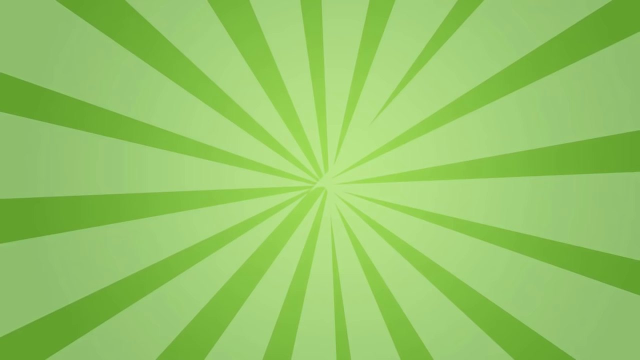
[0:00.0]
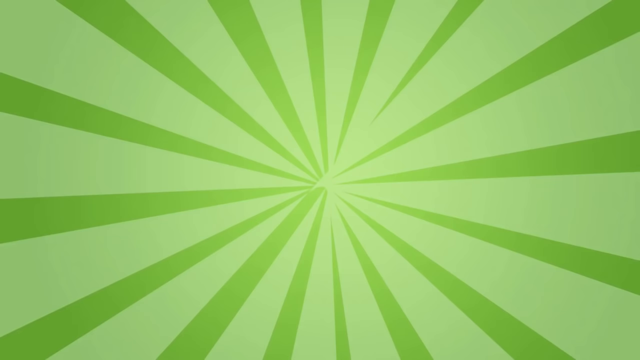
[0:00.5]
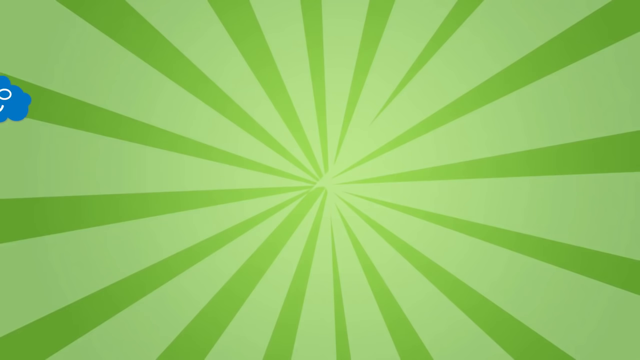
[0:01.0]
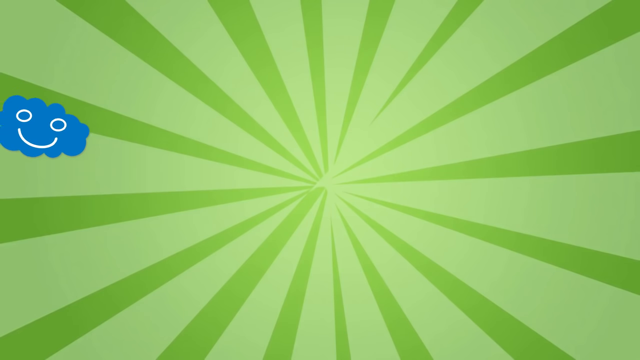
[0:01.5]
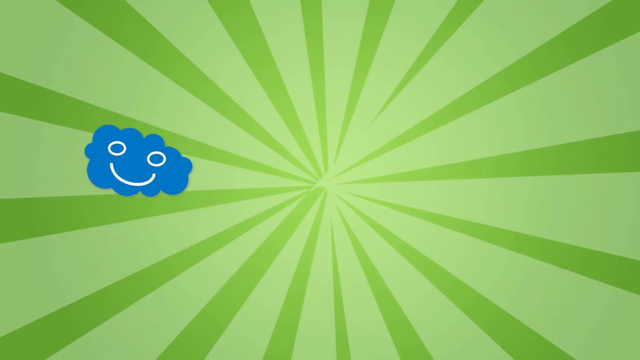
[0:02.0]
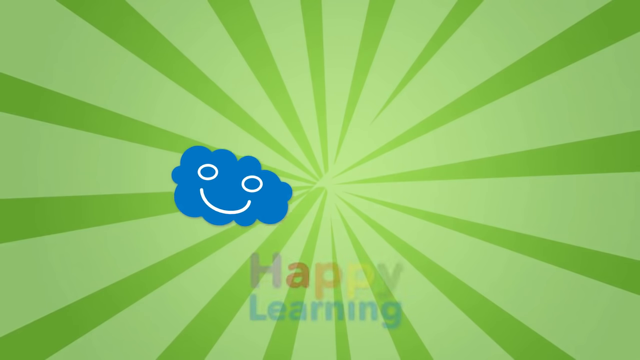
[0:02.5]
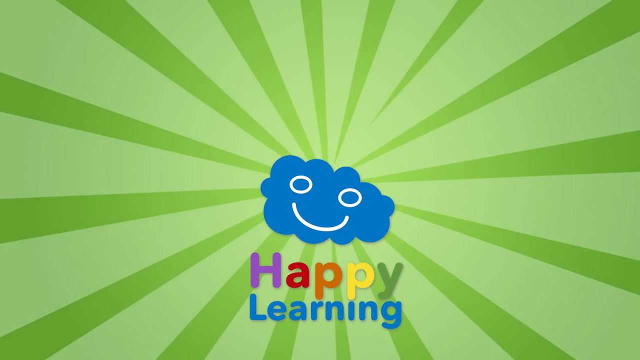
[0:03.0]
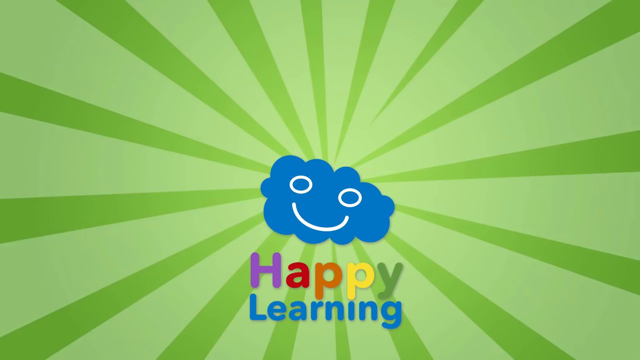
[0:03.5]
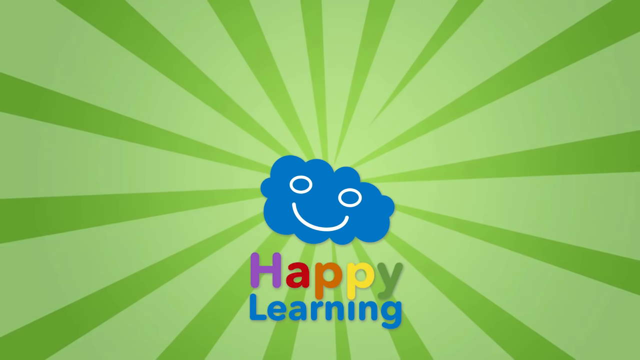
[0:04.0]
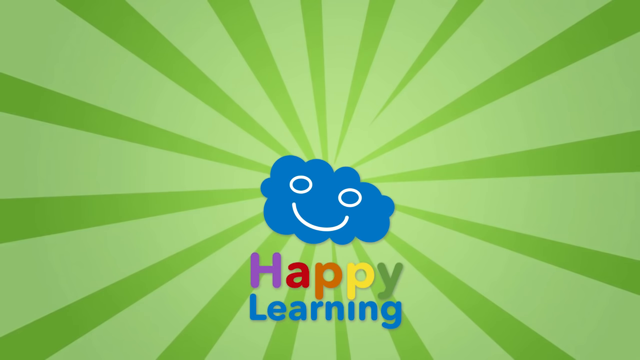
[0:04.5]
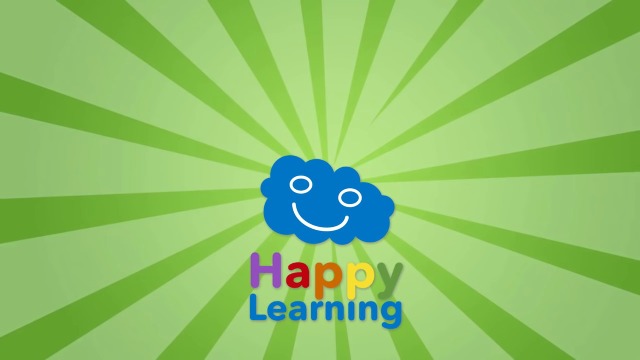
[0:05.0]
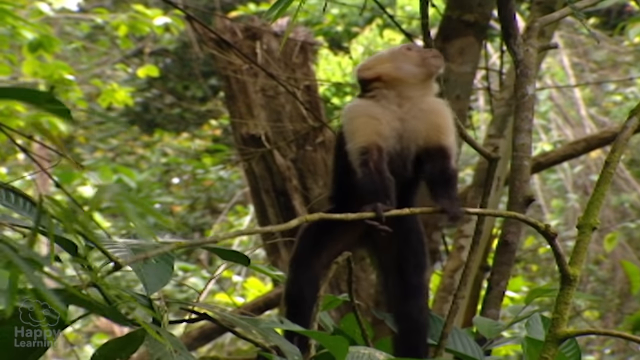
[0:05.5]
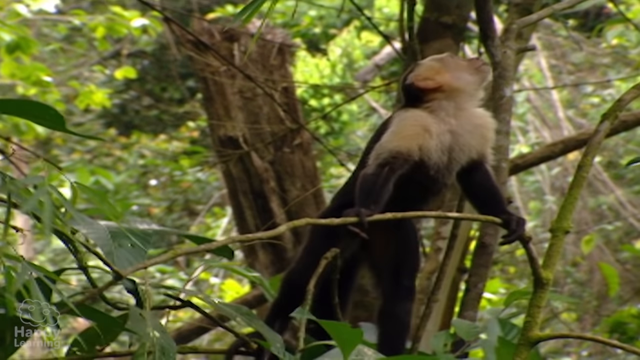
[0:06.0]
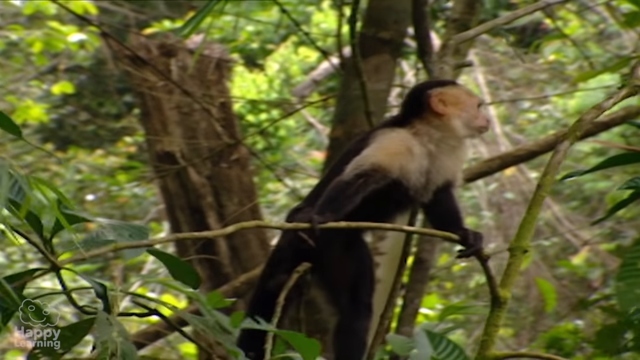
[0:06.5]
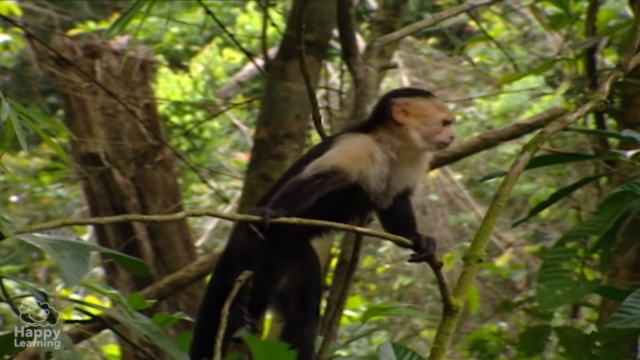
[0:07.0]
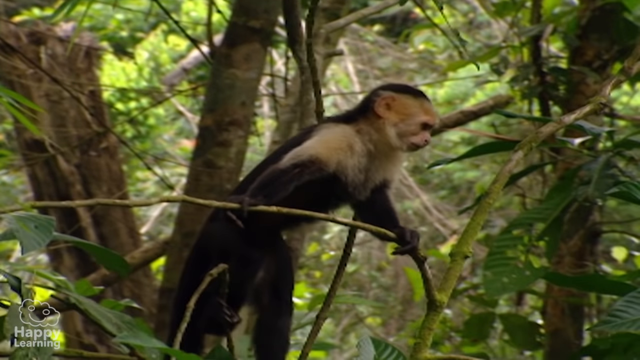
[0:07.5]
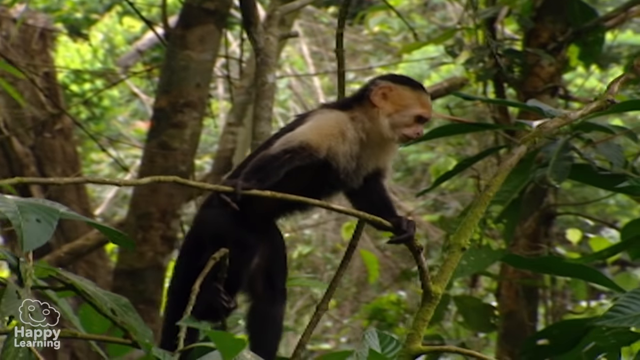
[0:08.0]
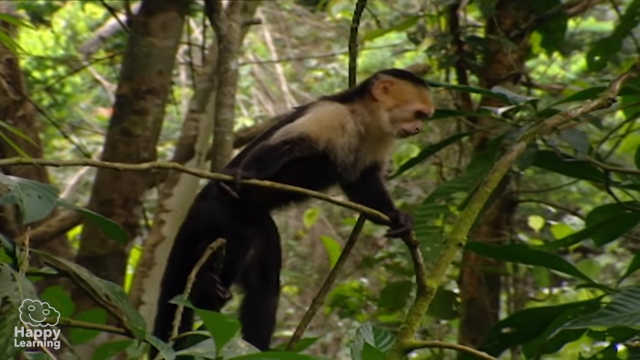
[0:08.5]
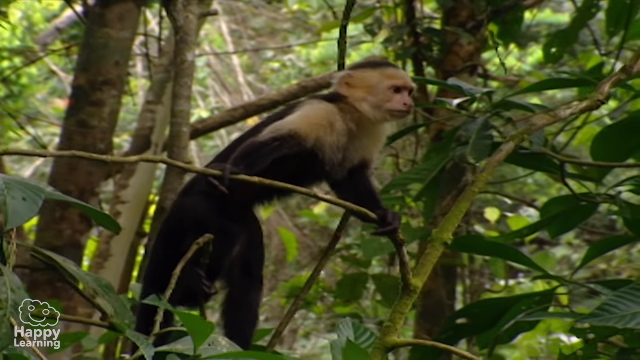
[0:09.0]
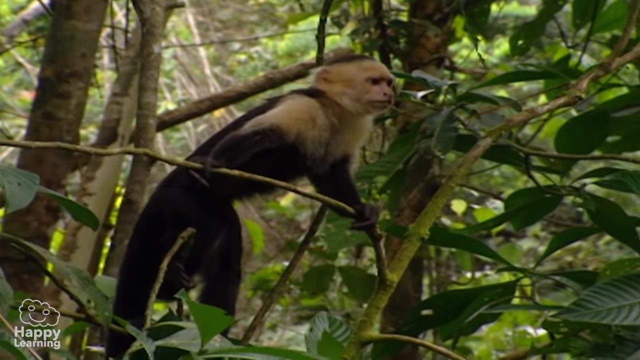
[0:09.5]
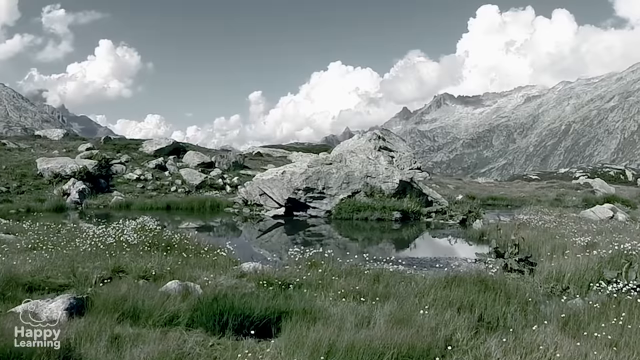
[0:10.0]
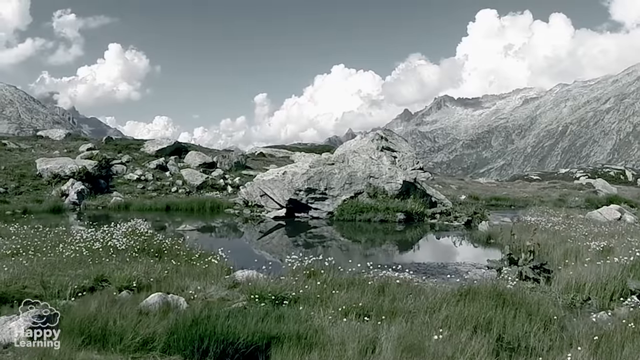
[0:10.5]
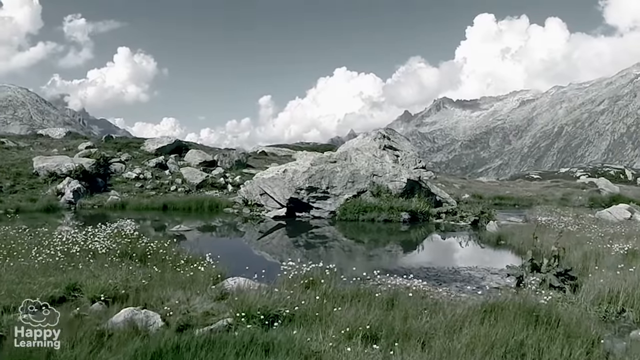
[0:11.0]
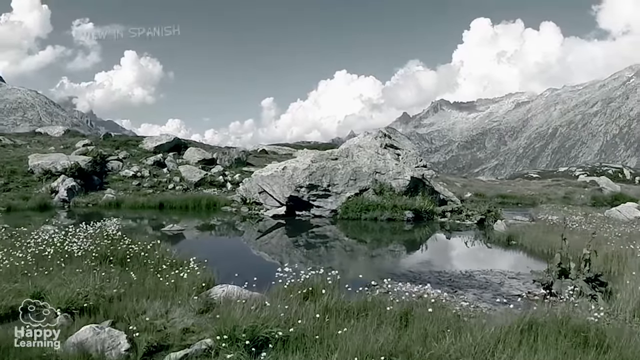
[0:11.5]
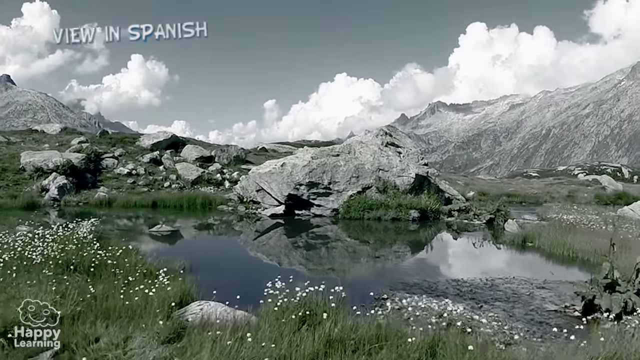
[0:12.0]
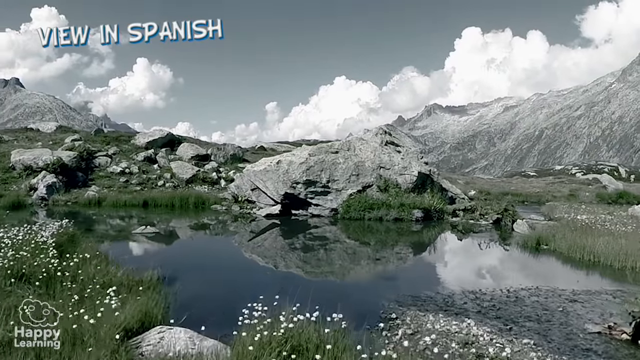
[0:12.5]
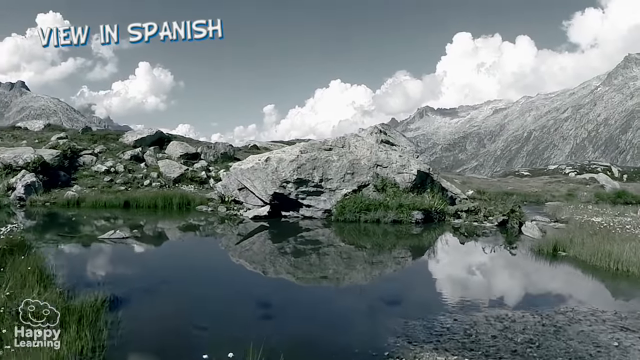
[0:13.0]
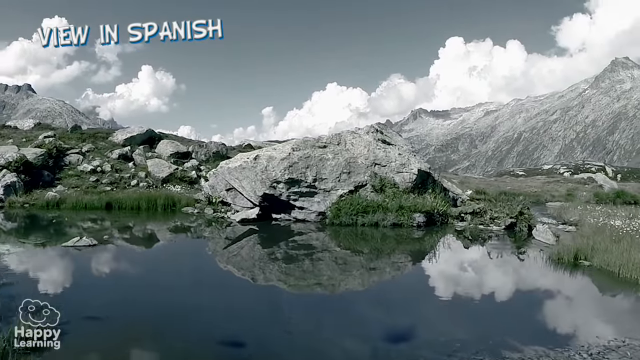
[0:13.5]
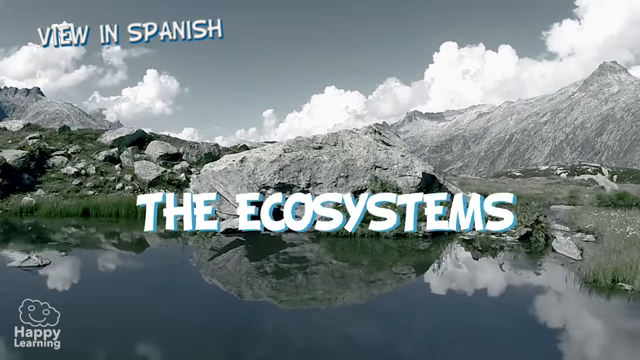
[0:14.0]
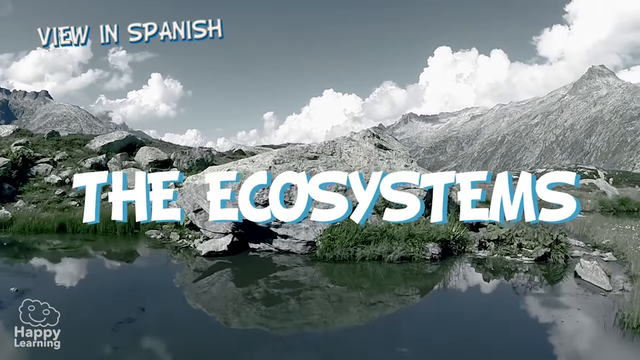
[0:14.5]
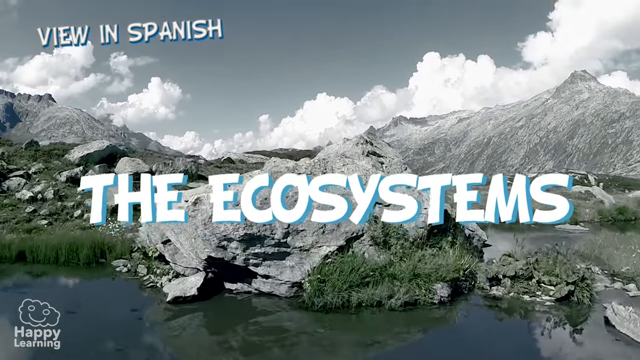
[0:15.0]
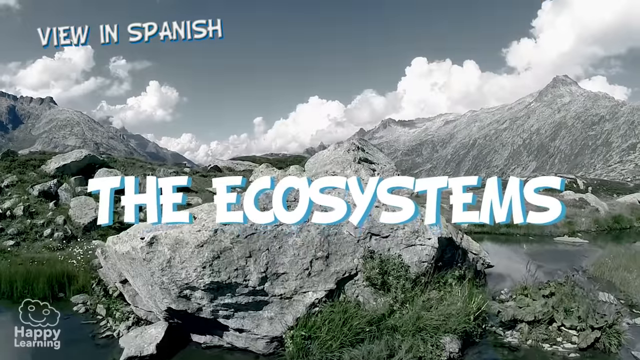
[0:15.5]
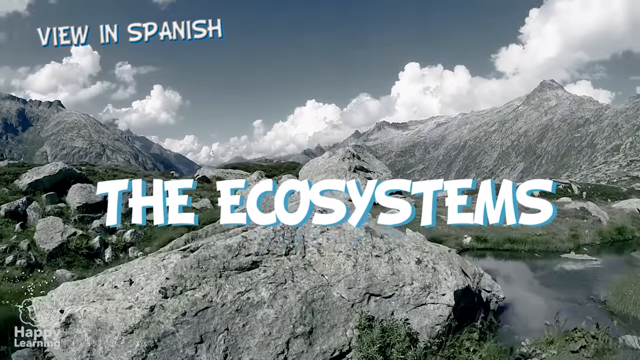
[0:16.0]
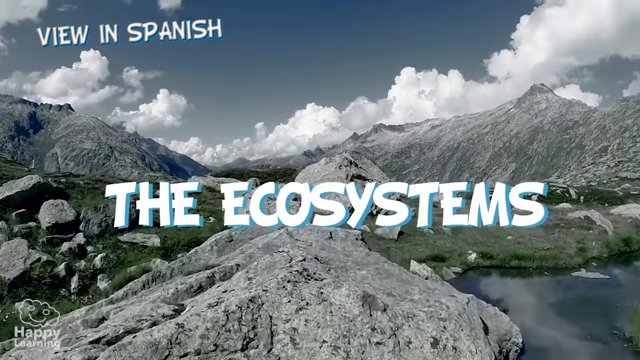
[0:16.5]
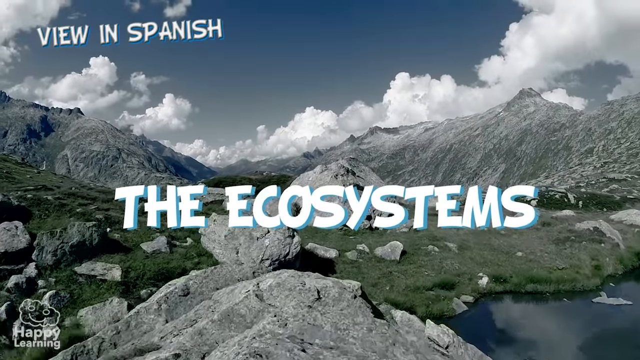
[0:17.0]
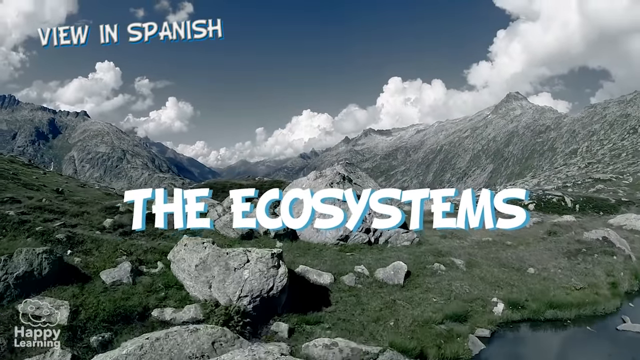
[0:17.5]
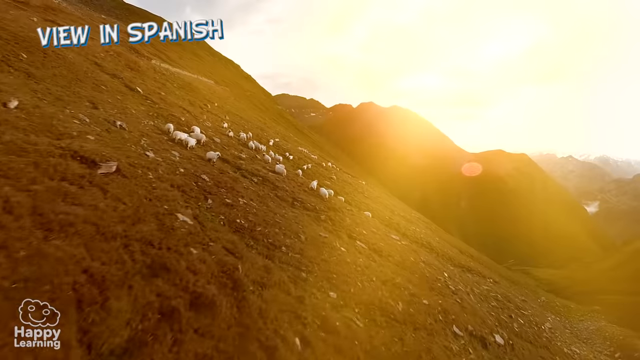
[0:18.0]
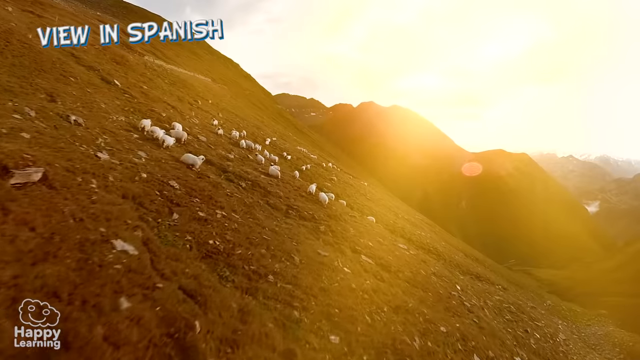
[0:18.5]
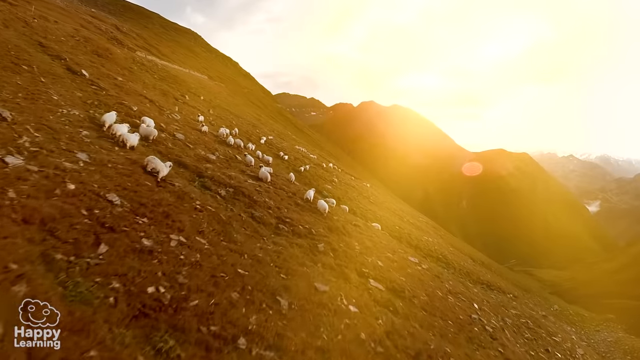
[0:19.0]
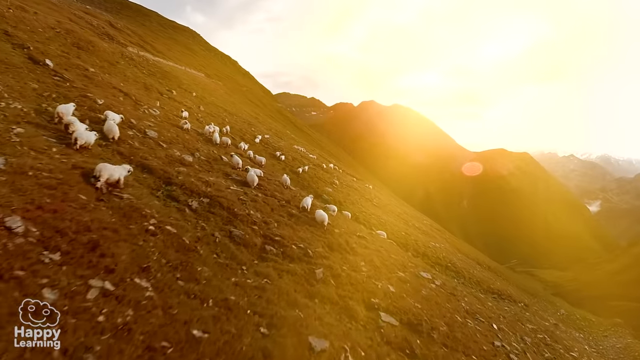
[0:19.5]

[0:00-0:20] The video starts with a green background bearing a starburst design, and a cloud with a smiley face drifts into the picture. Beneath the cloud are the words "Happy Learning". Next comes a shot of a rhesus monkey in a tree, holding on to the branches, which sway as he moves. The scene changes to a body of water with a large rock at one end, mountains in the background, and more rocks and dirt surrounding it. The words "The Ecosystems" pop up on the screen as the camera zooms over the rock and towards the mountain. Then the view moves over a field with some sheep, and the camera zooms over them.